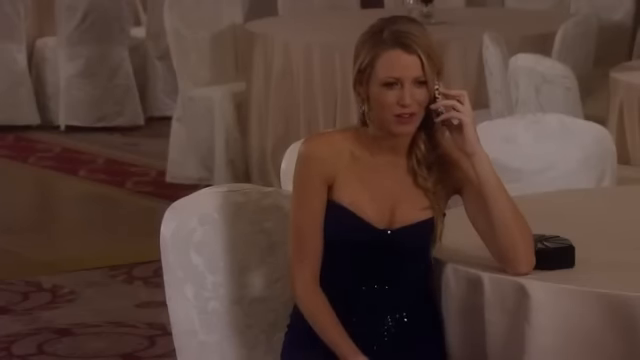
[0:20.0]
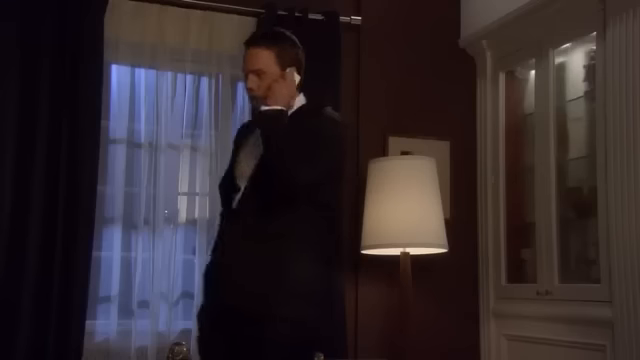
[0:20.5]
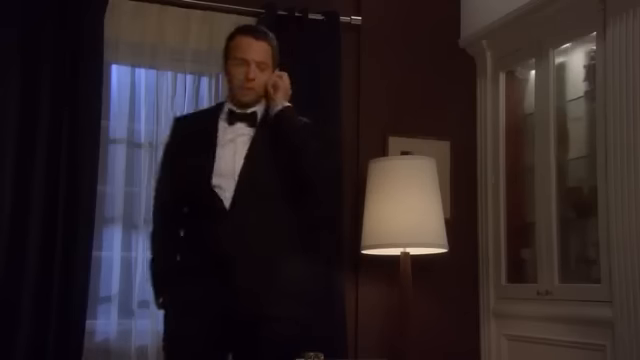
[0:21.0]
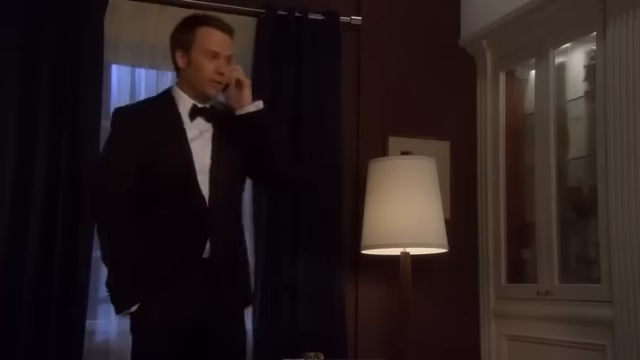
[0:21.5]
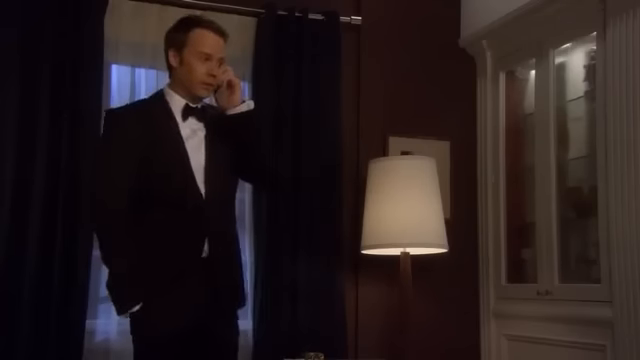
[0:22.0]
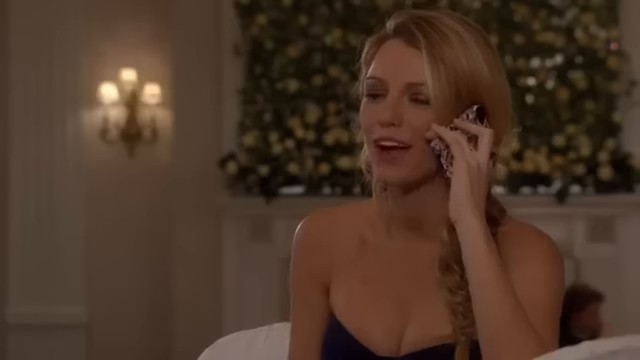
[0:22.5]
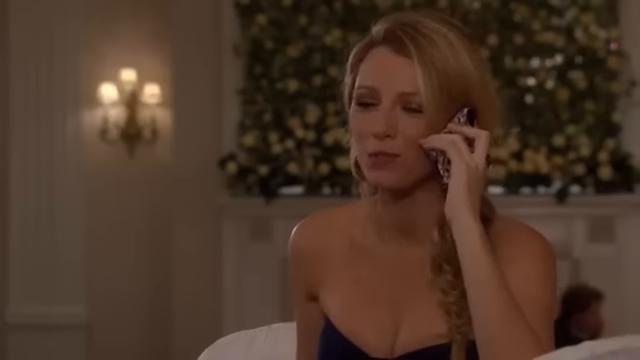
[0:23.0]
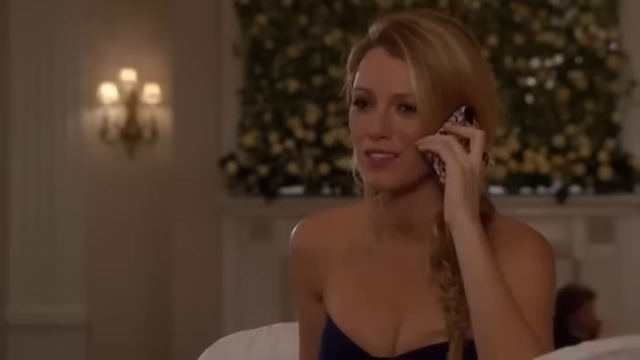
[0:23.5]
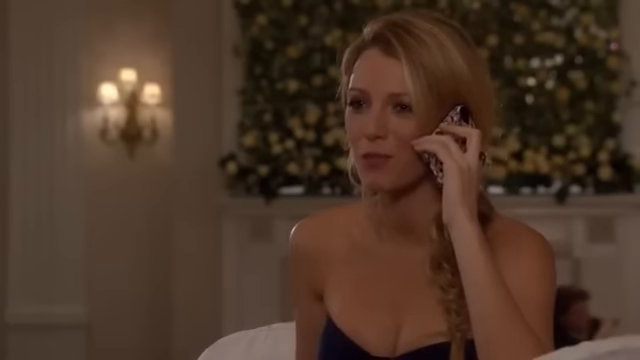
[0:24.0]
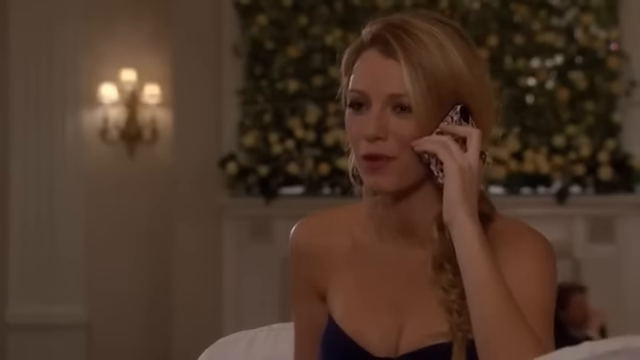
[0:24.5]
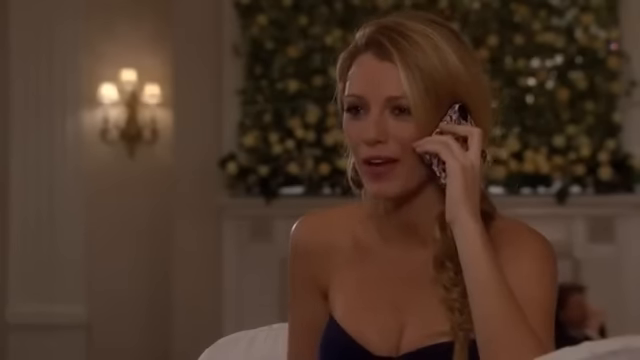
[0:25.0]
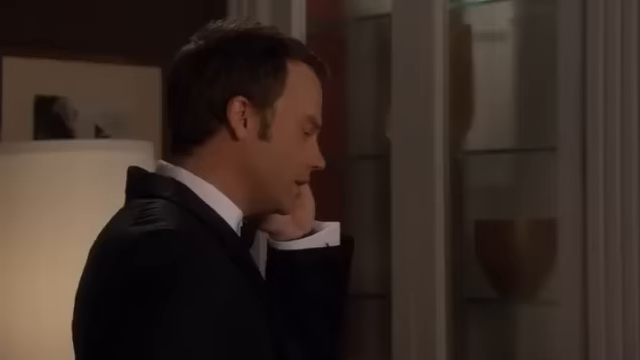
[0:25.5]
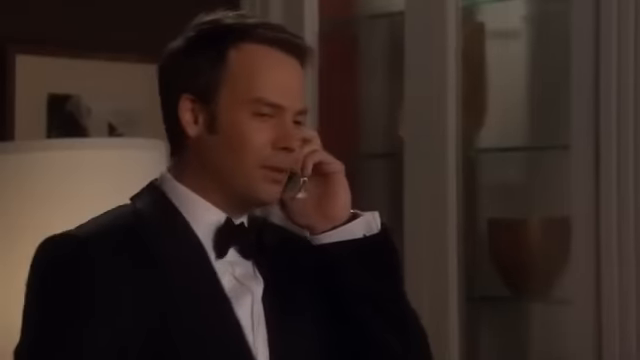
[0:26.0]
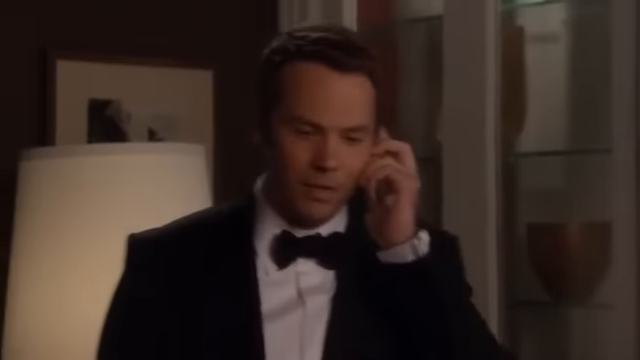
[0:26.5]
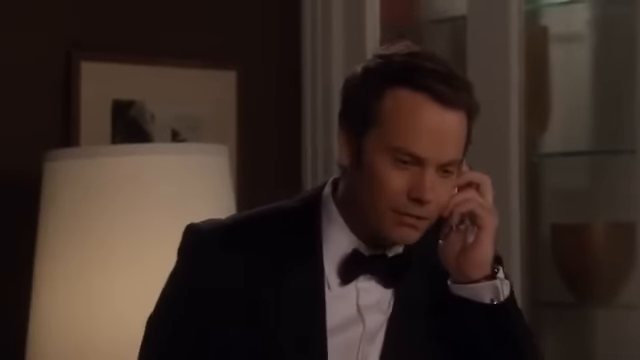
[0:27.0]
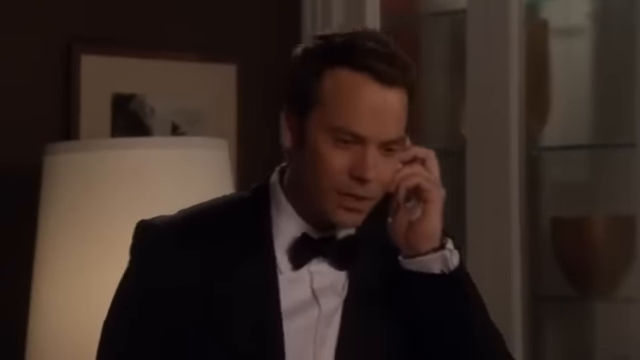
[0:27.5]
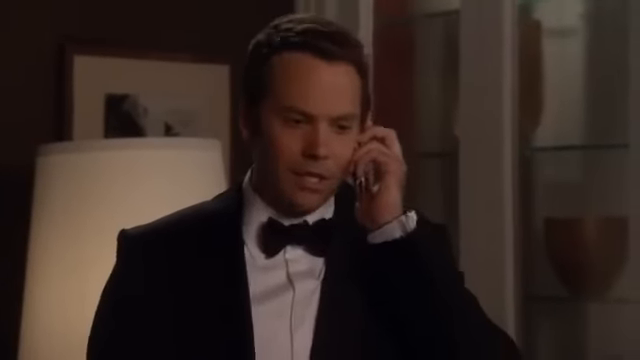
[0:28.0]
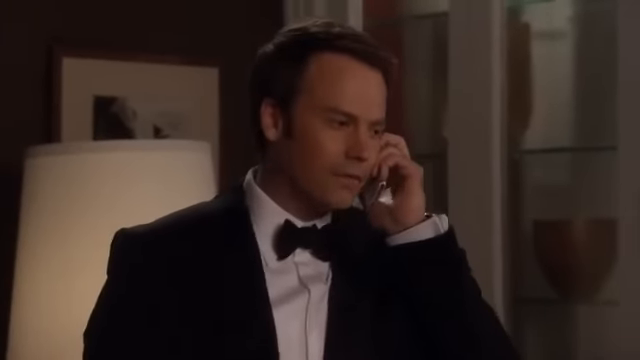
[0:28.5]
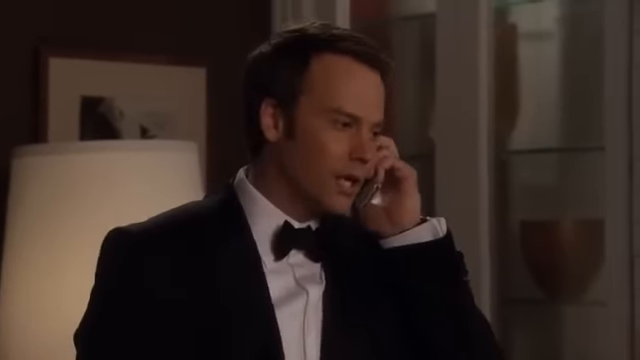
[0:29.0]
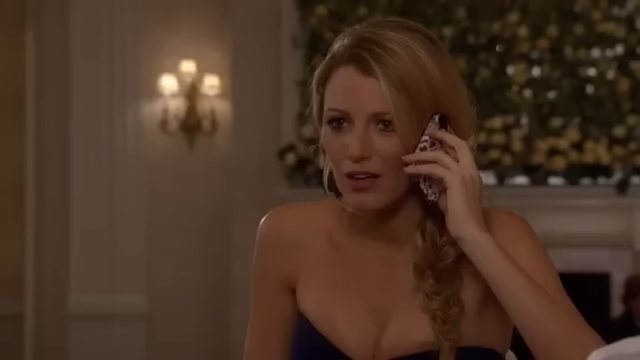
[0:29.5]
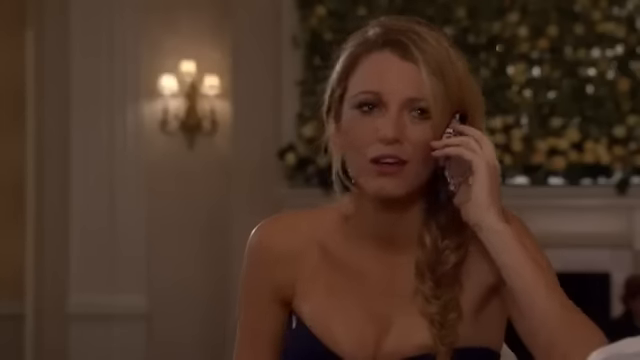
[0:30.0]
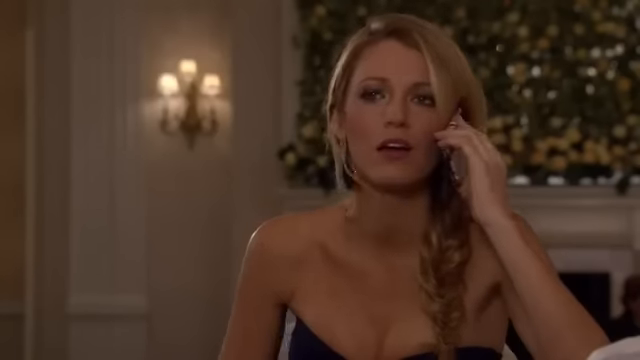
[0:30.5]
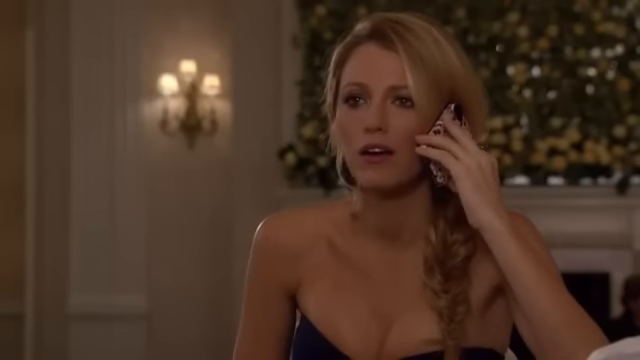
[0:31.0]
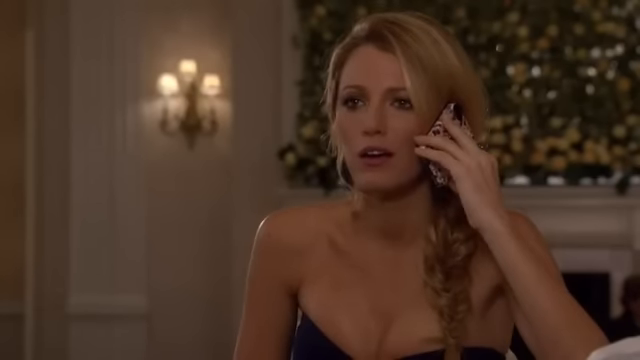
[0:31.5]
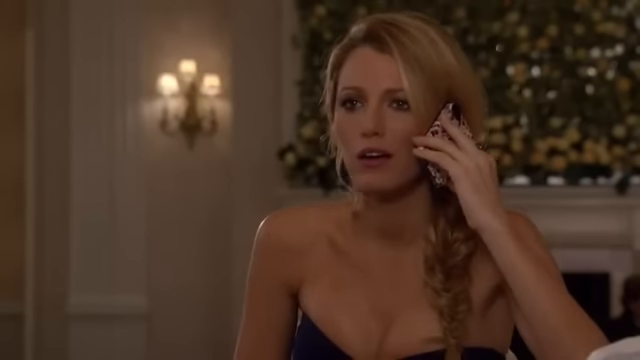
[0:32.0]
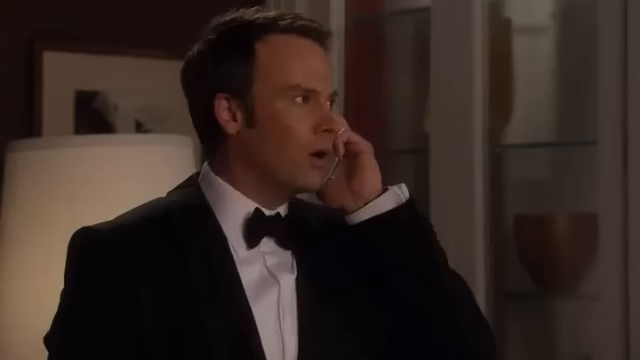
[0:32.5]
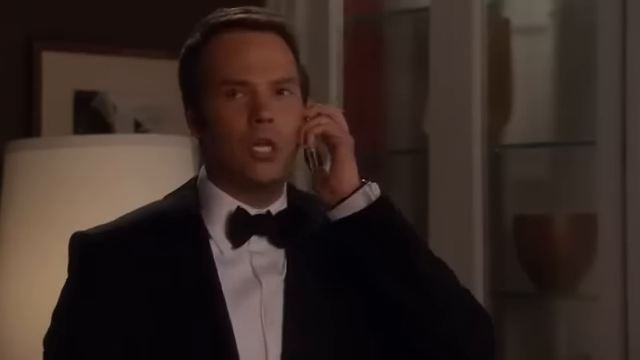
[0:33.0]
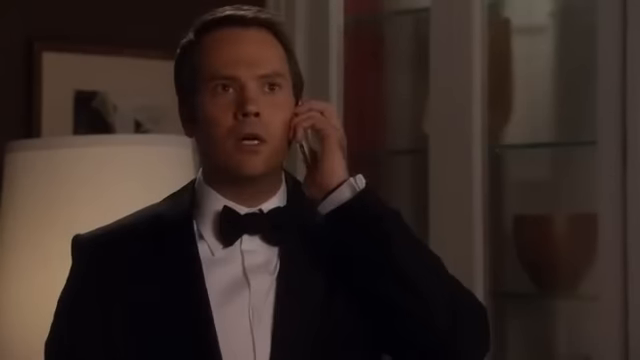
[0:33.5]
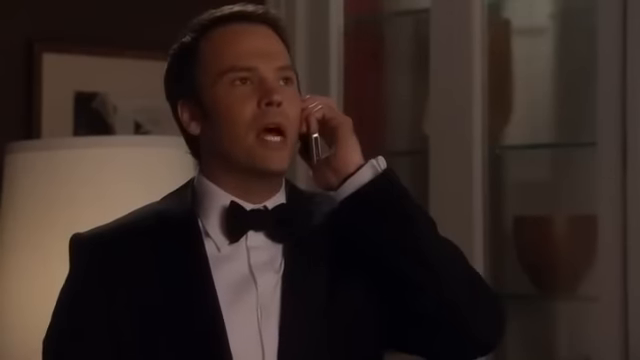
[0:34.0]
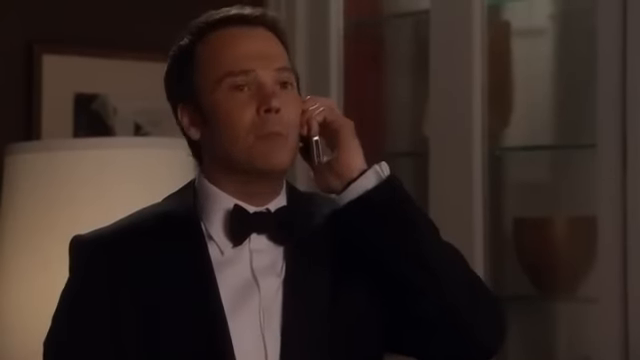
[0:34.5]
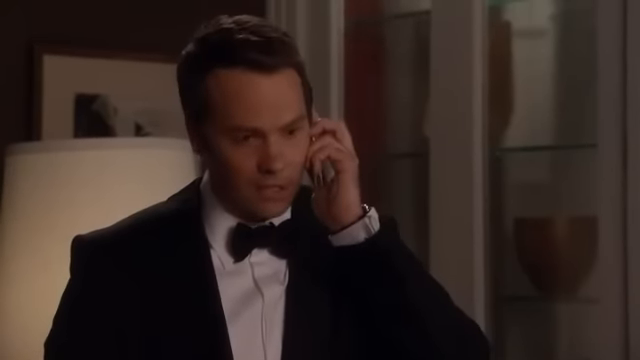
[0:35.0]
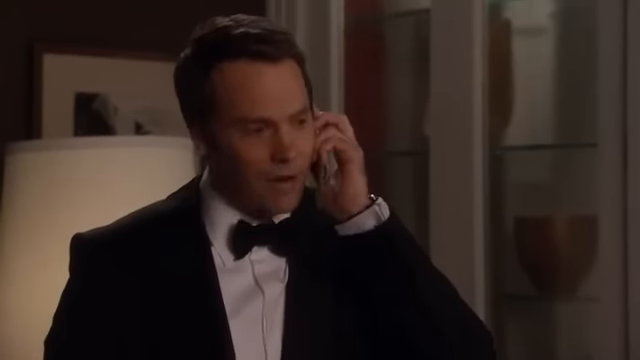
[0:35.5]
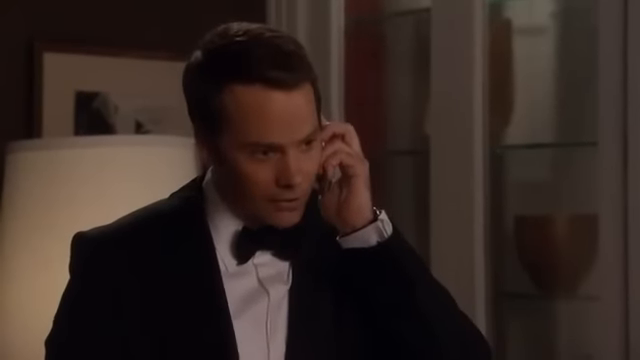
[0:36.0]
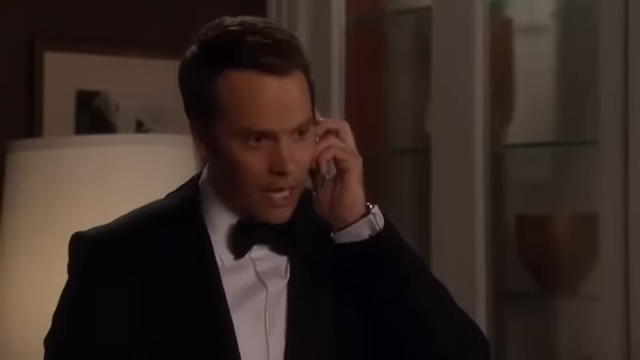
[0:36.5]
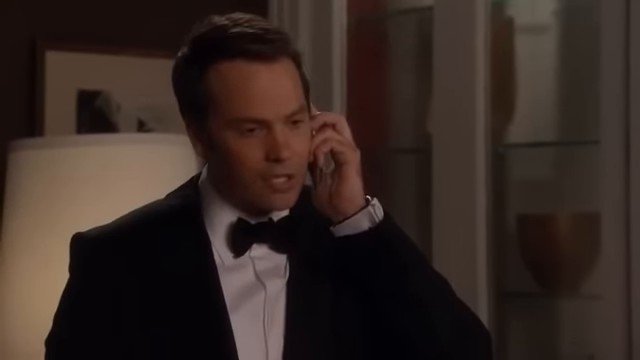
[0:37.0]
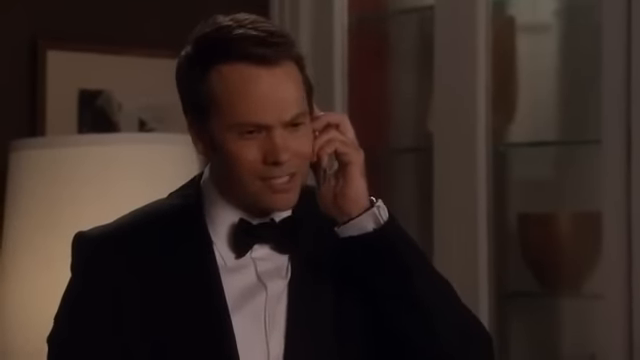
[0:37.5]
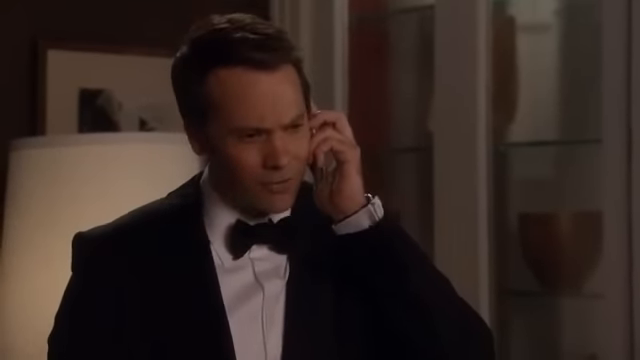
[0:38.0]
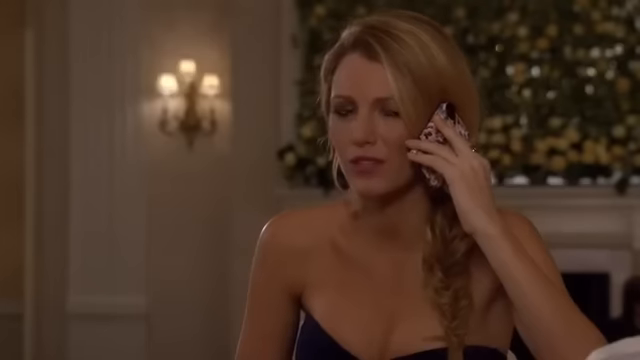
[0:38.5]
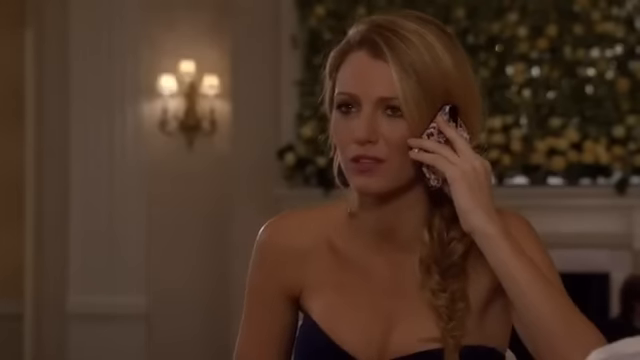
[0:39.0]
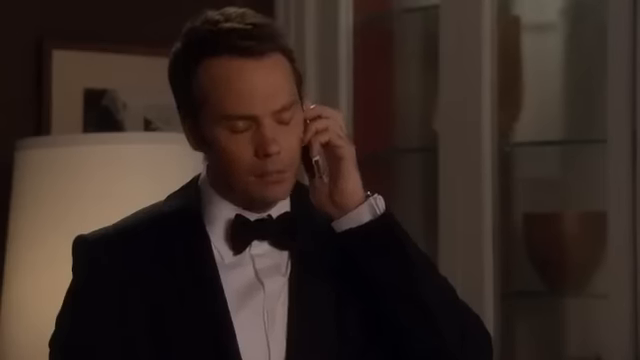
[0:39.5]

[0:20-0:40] A woman in a blue dress speaks on a telephone, holding the phone in her left hand. Behind her is her black purse, close to her left elbow. She is in some kind of hotel, with tables behind her and chairs fitted with chair covers. A man then talks in a hotel, with a window, curtains and a lamp behind him, along with a shelf with a glass. After some time, a flower decoration is visible behind the woman. The two keep talking, and the man wears a tuxedo.